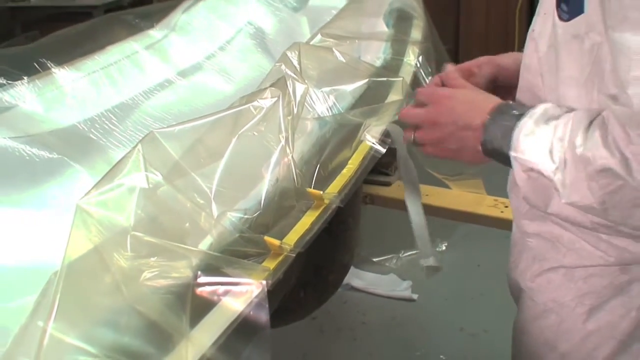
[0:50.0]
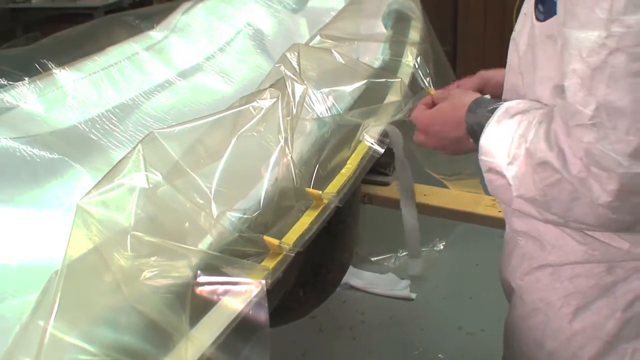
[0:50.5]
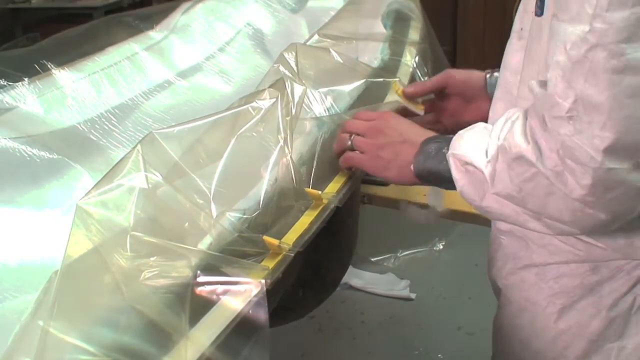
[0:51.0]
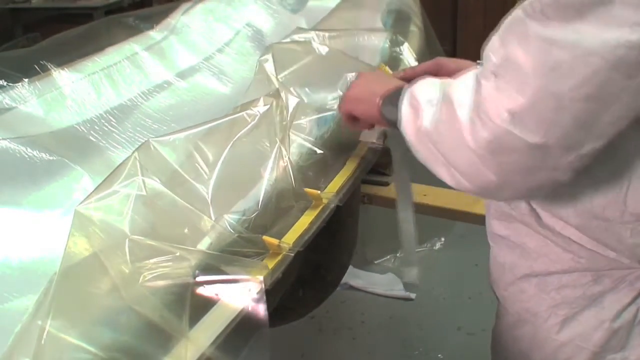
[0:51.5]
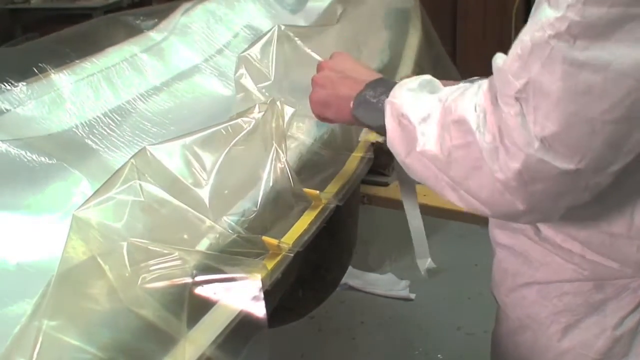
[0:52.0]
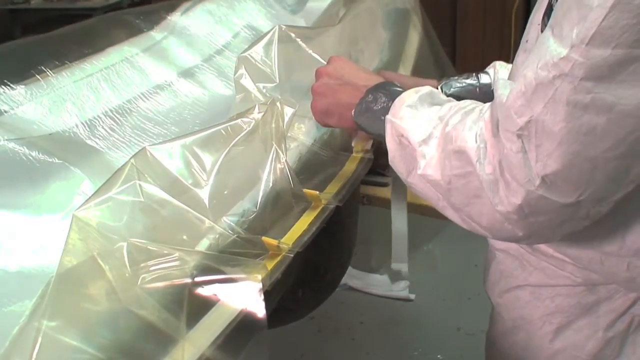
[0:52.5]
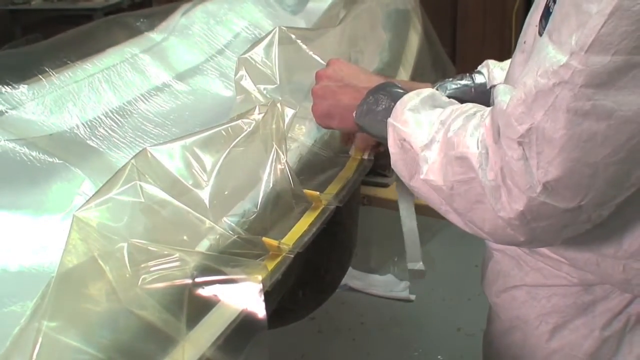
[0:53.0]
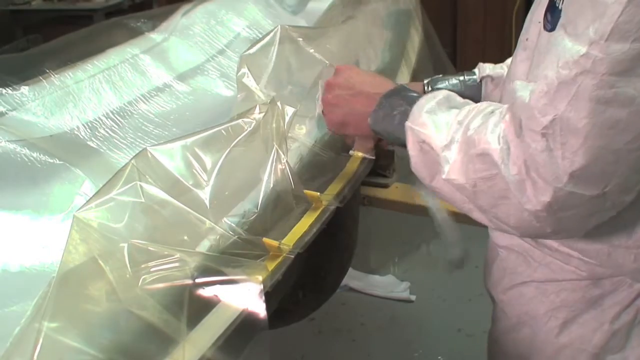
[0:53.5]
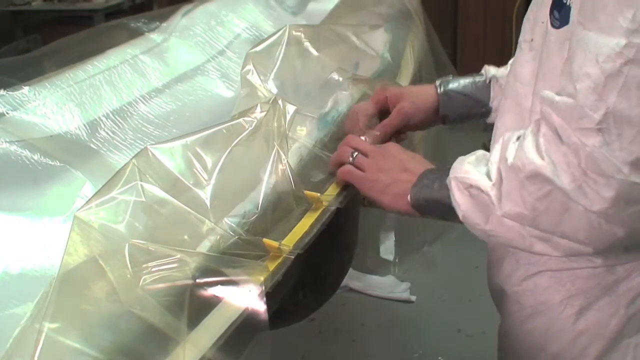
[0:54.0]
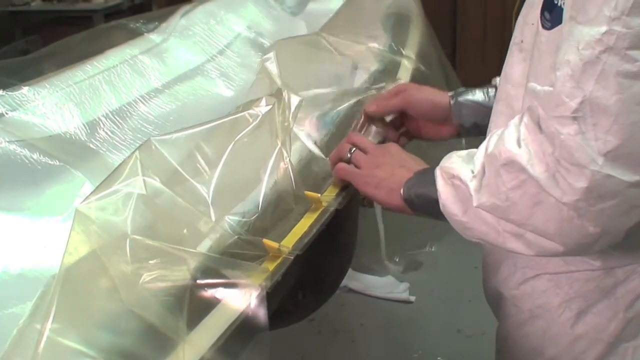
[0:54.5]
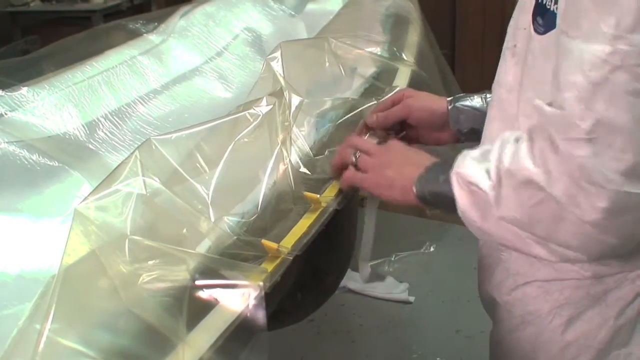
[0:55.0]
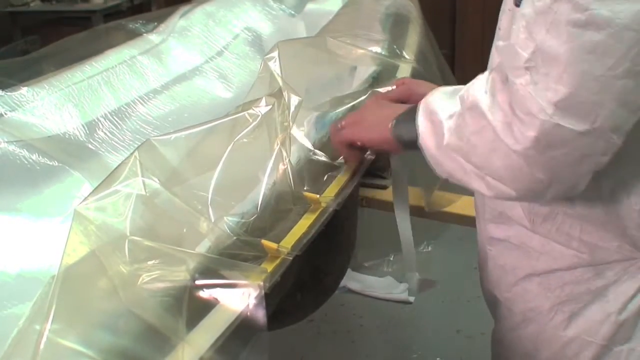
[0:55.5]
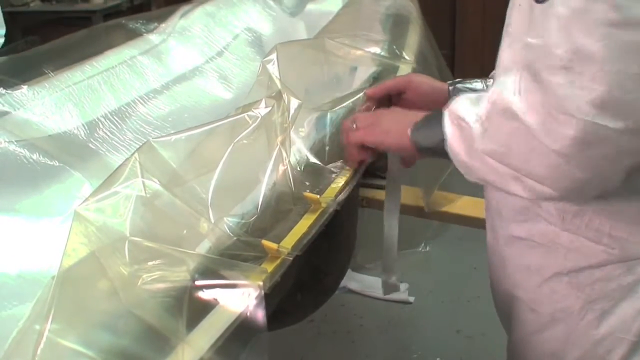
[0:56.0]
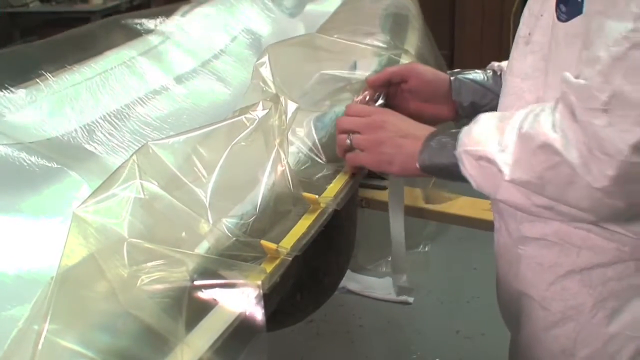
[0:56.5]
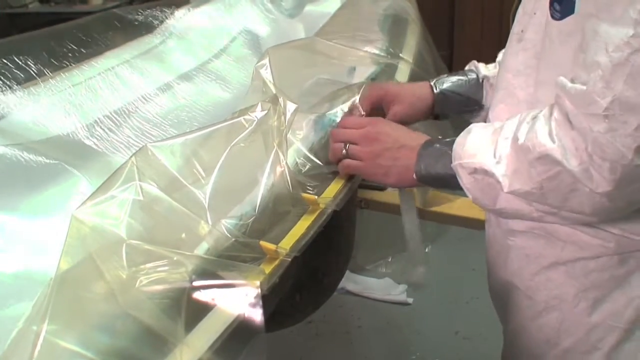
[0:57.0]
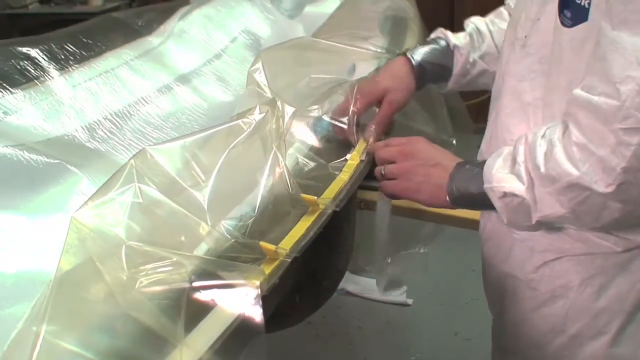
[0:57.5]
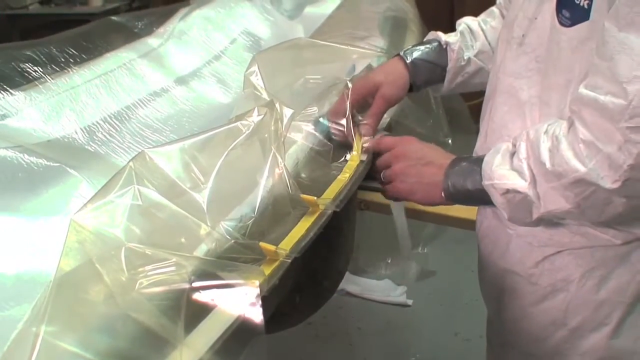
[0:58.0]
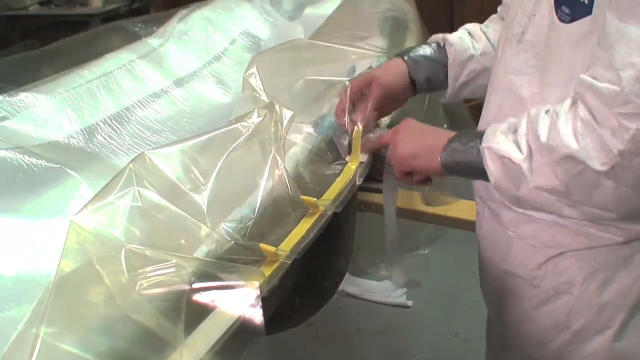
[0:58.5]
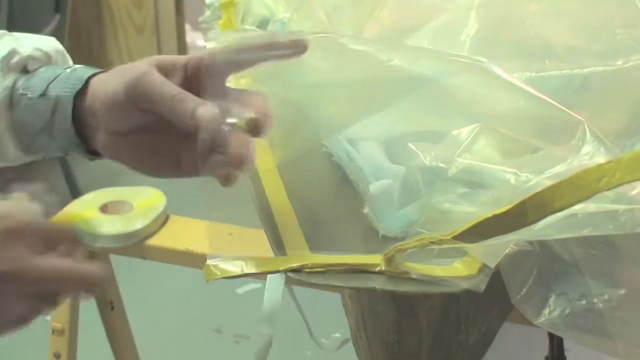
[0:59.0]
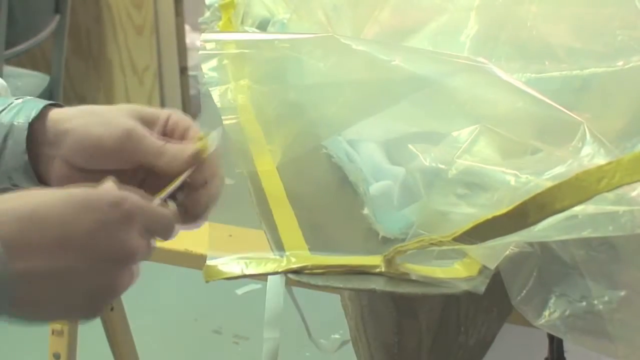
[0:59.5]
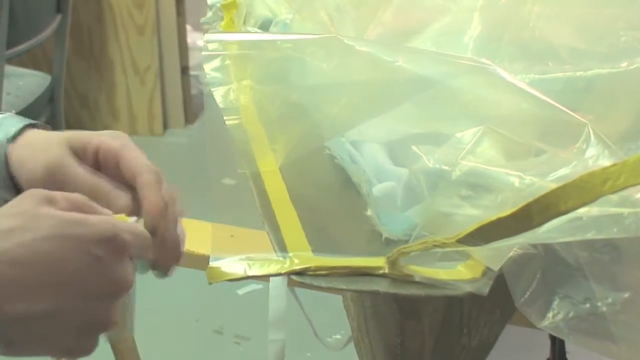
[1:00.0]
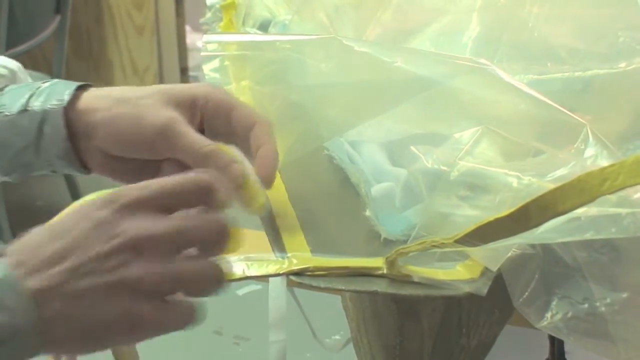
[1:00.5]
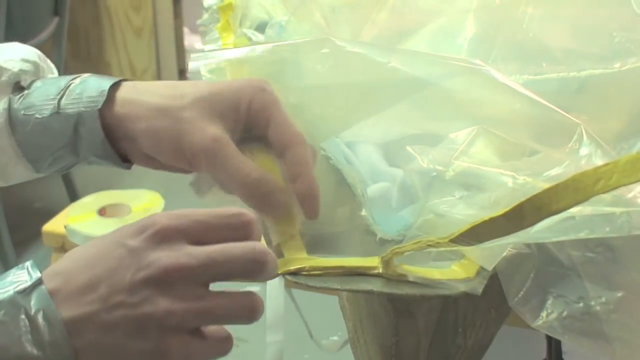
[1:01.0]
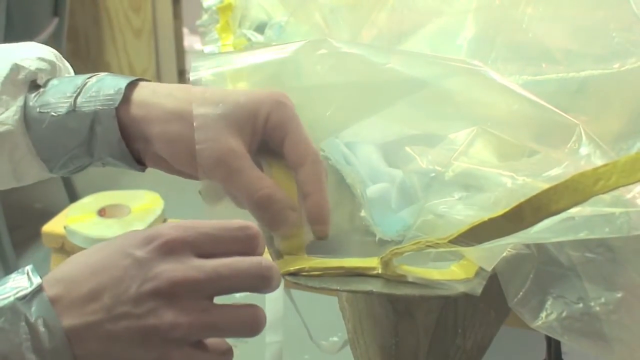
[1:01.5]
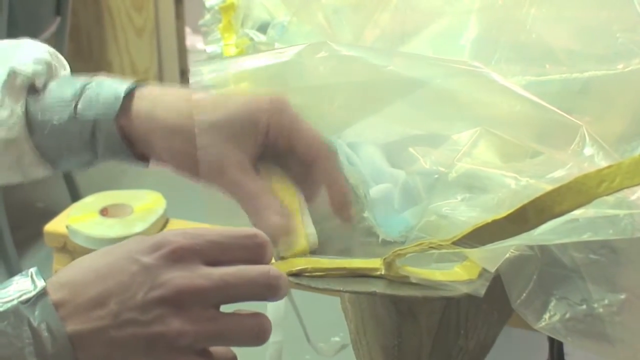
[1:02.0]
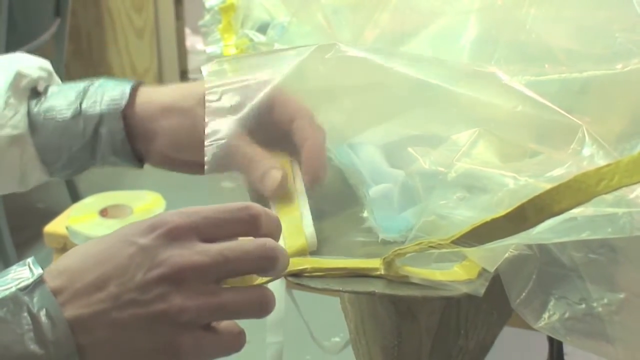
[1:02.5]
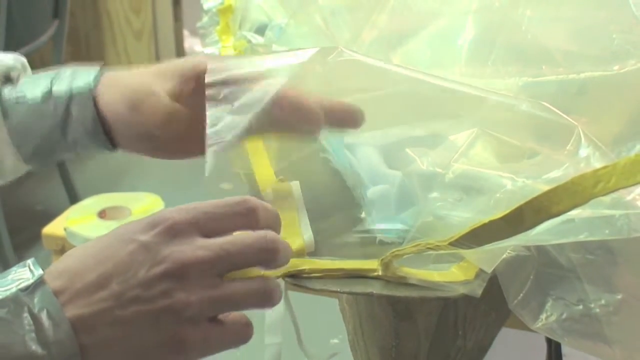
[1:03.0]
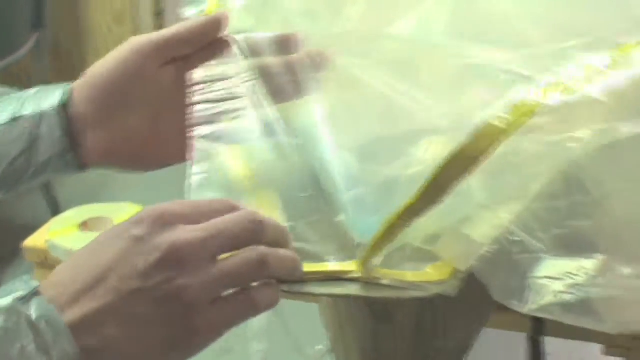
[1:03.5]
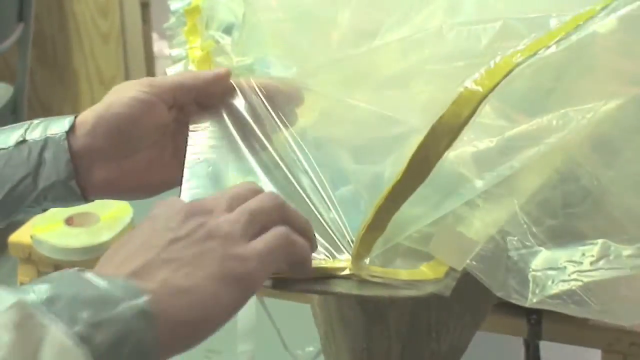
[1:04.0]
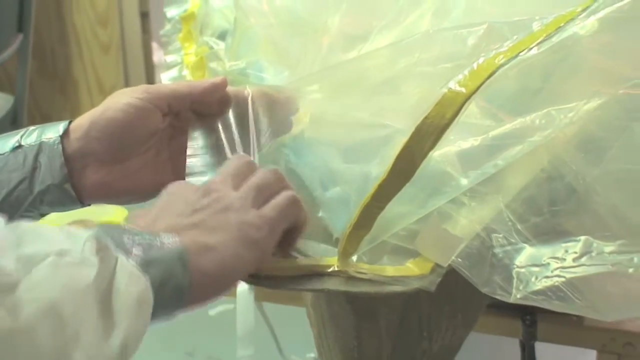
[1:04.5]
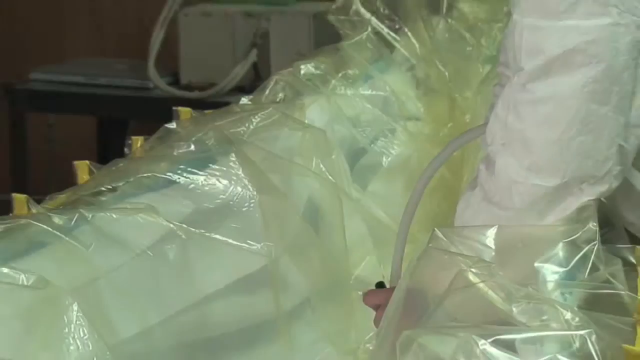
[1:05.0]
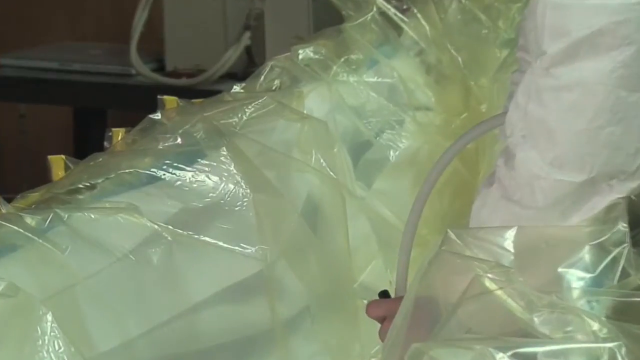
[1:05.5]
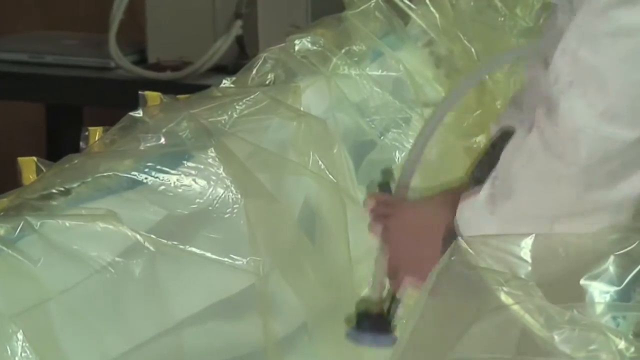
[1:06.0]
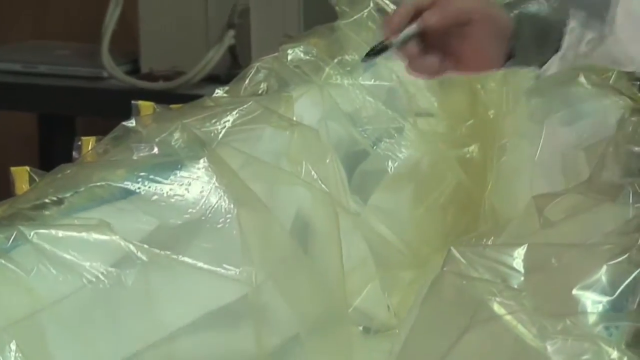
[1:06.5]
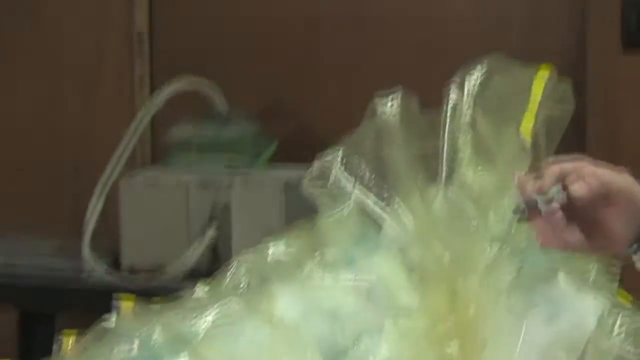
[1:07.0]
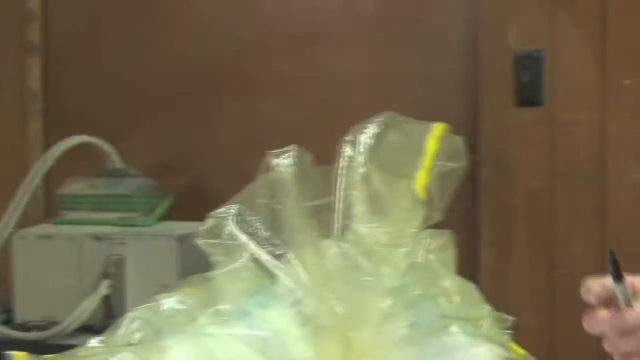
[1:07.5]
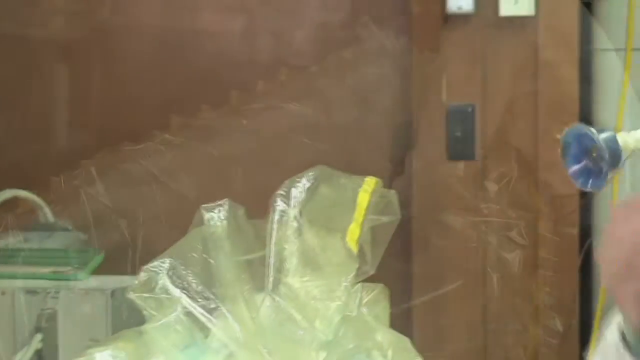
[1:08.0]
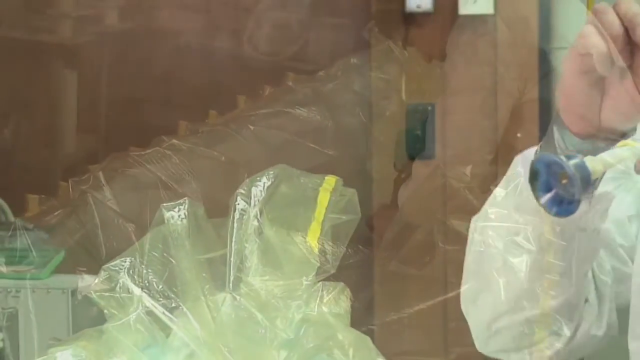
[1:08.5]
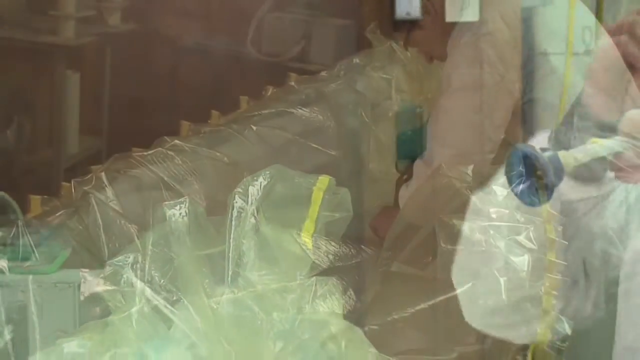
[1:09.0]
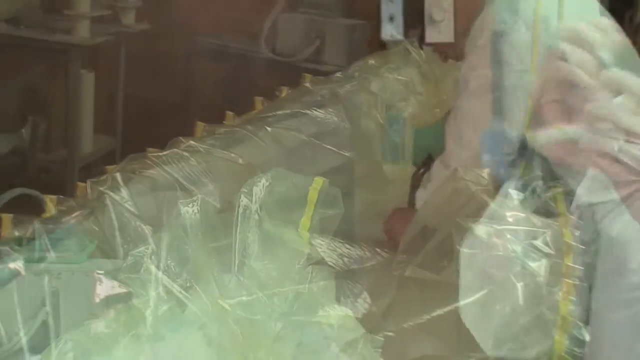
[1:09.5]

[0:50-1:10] One of the men continues placing tape on top of the sides of the canoe with the plastic film. He is wearing a white lab coat as protective gear. He places more yellow tape around the sides of the canoe, then holds a nozzle that looks to be a paint gun. His wrists are covered by what looks to be duct tape. The man looks to be of white Caucasian ethnicity. The setting is an indoor building with a good amount of artificial light, so everything is clear and visible. There are no animals present, and the video is in a rectangular shape.